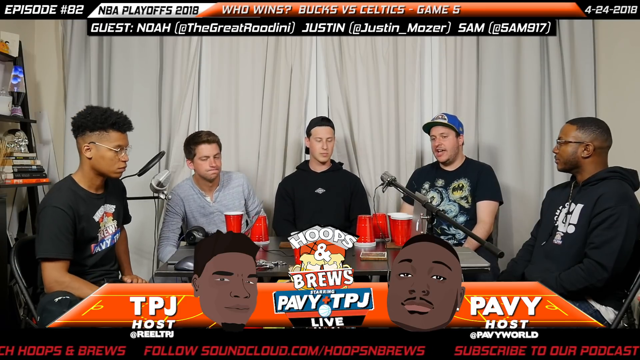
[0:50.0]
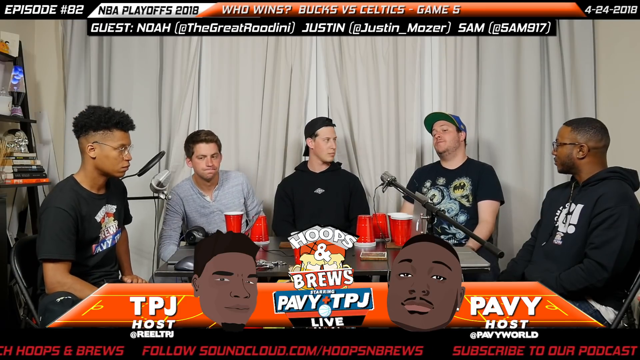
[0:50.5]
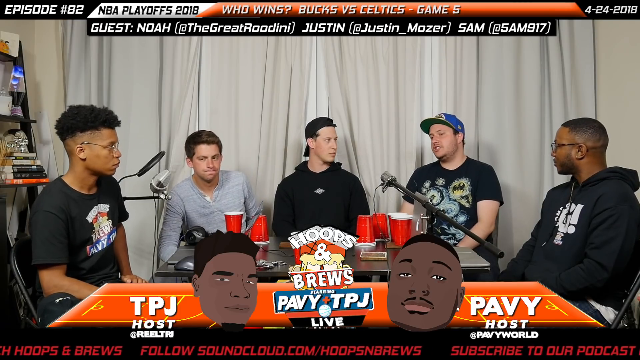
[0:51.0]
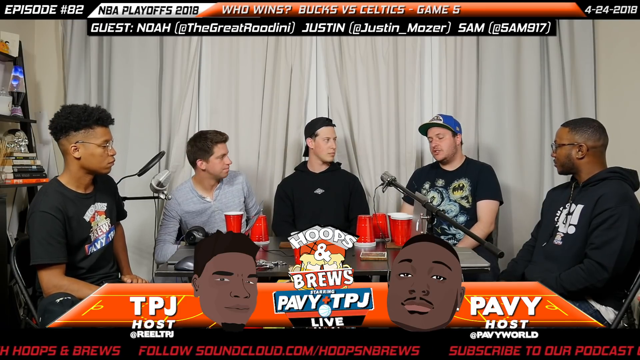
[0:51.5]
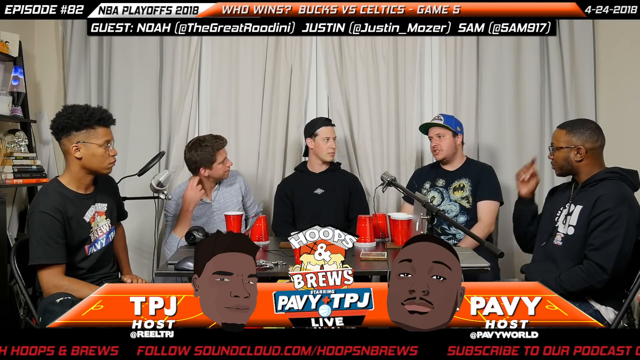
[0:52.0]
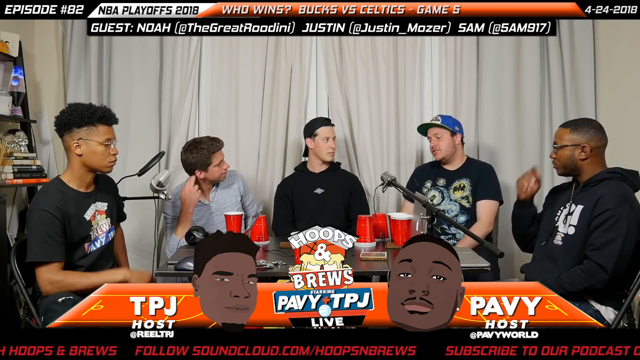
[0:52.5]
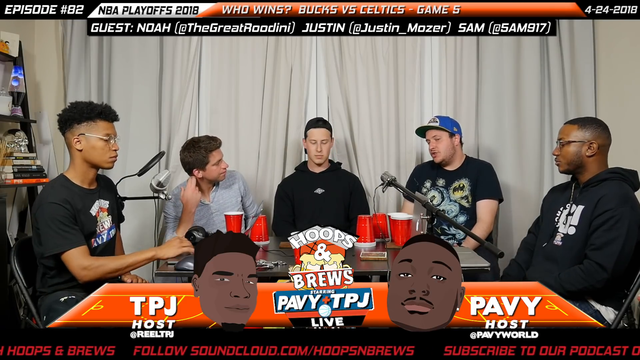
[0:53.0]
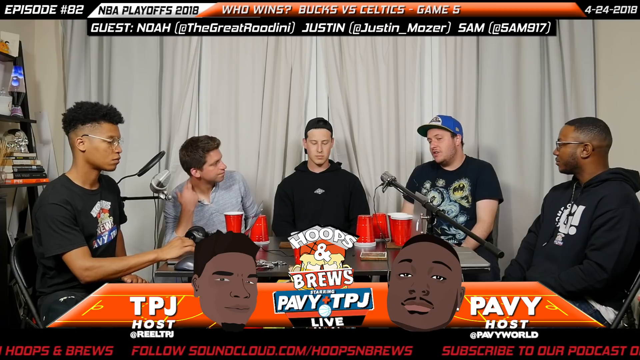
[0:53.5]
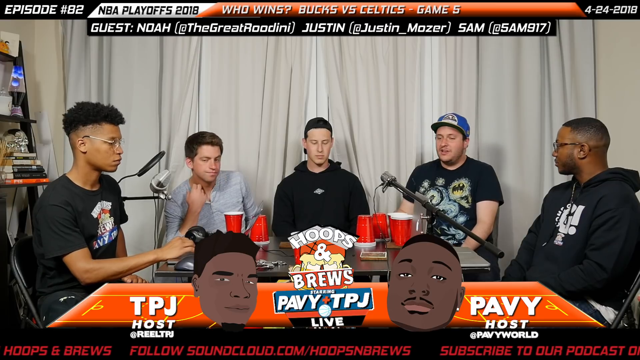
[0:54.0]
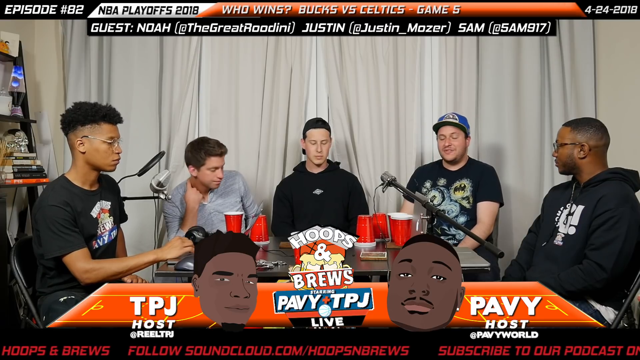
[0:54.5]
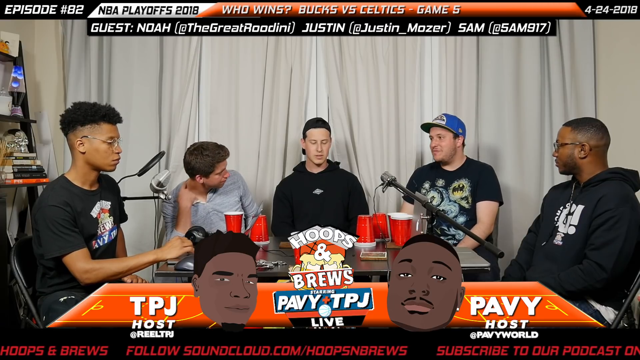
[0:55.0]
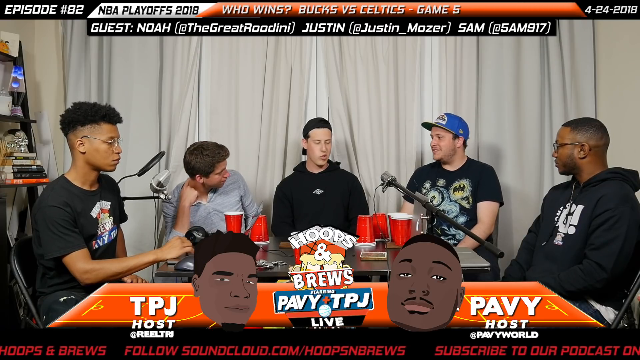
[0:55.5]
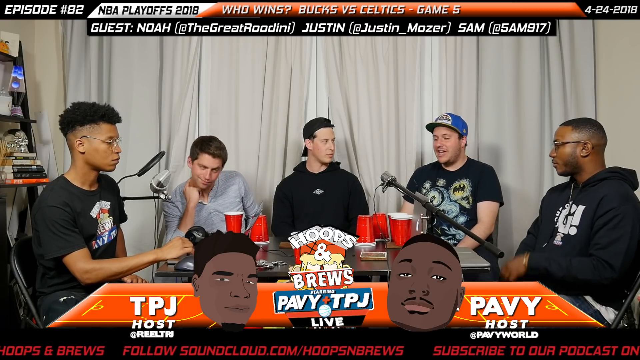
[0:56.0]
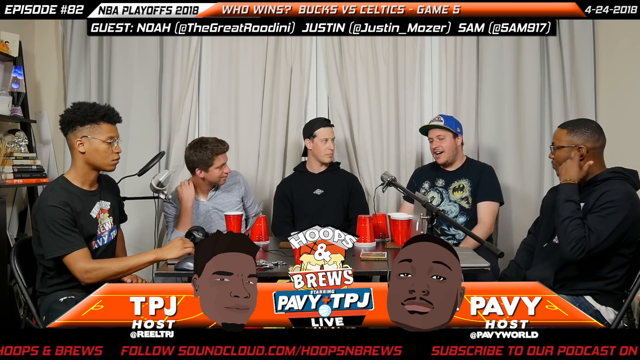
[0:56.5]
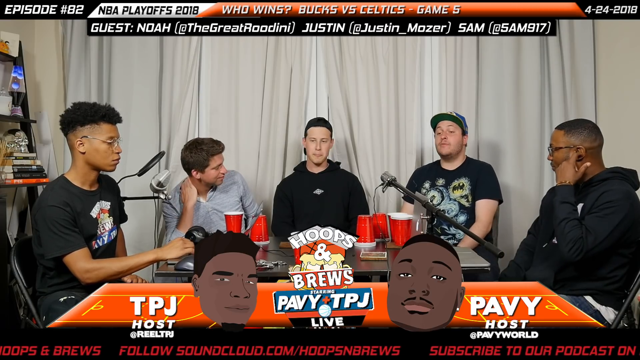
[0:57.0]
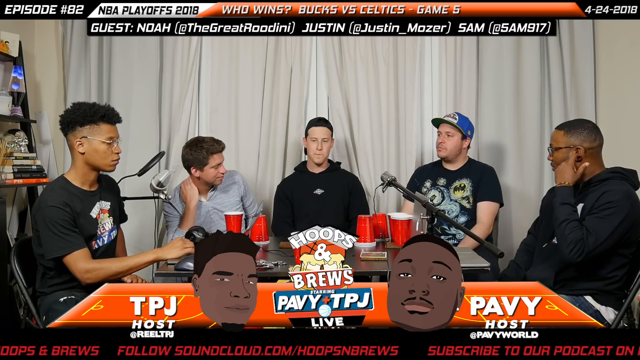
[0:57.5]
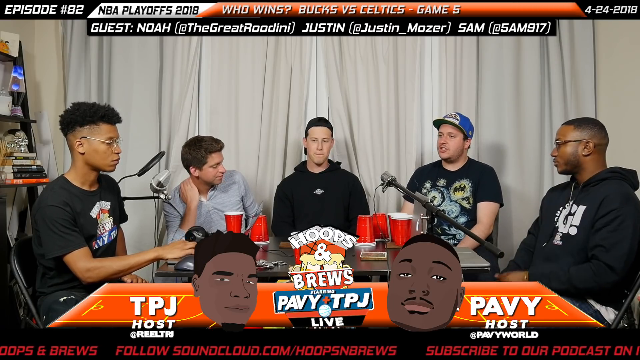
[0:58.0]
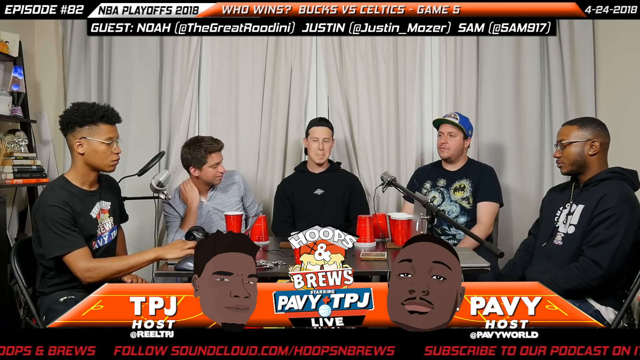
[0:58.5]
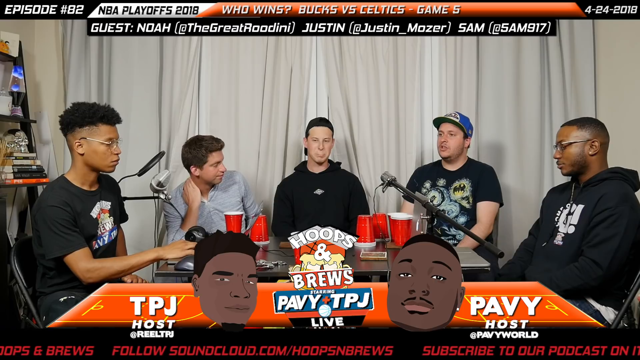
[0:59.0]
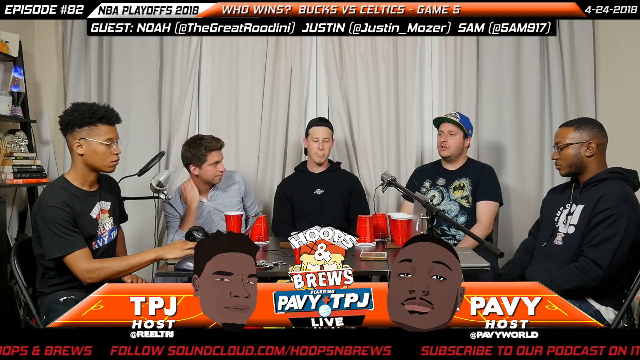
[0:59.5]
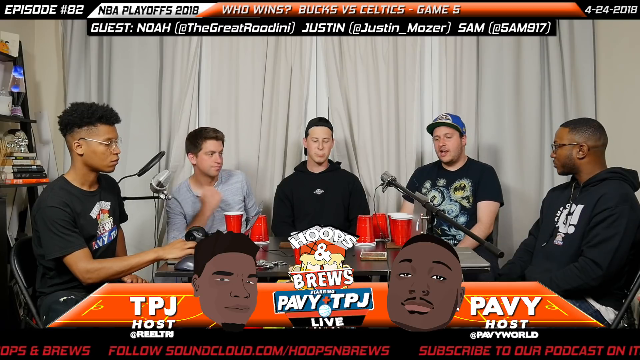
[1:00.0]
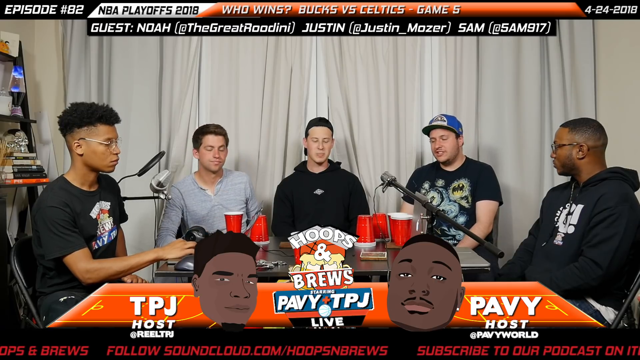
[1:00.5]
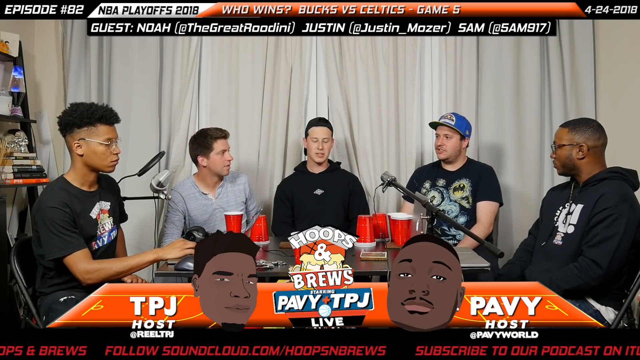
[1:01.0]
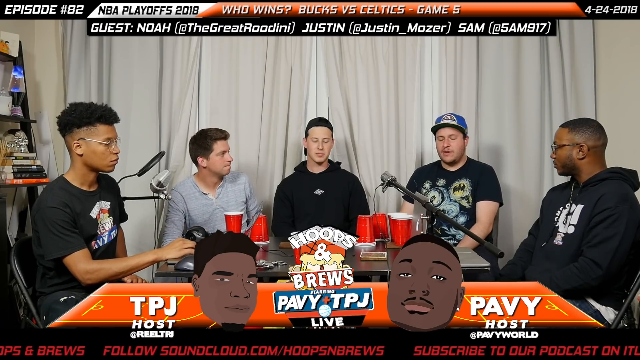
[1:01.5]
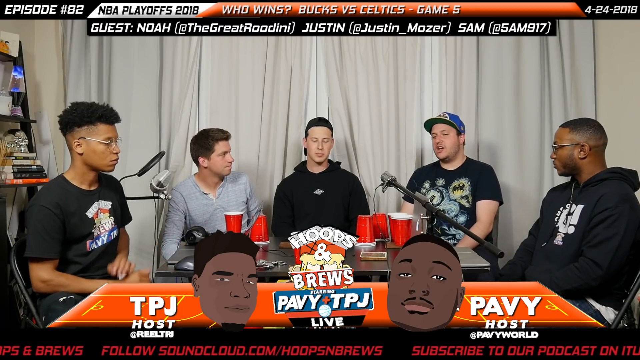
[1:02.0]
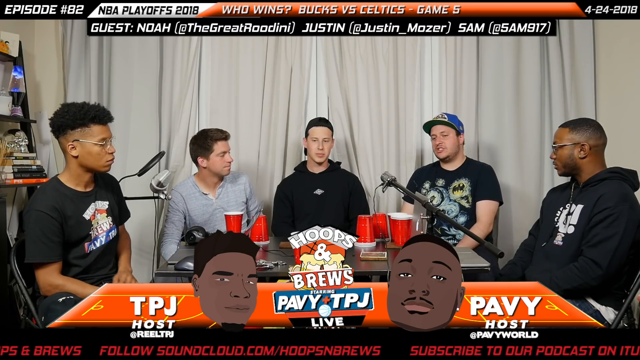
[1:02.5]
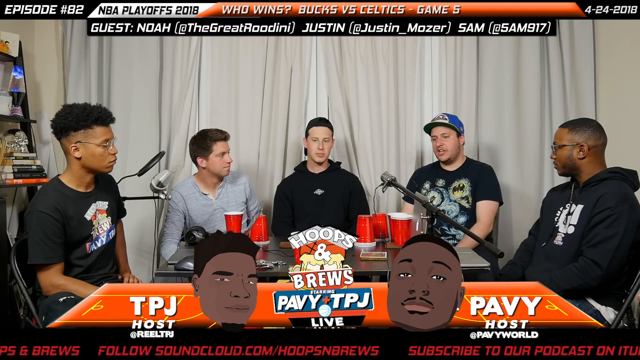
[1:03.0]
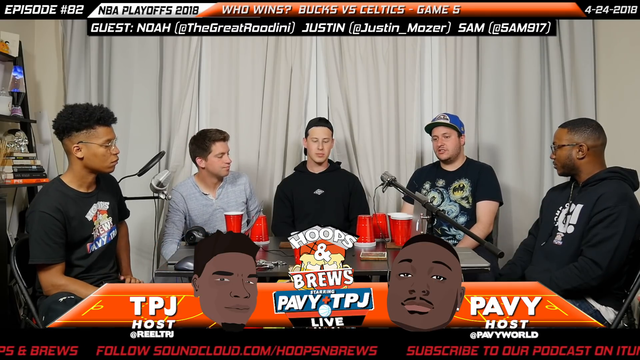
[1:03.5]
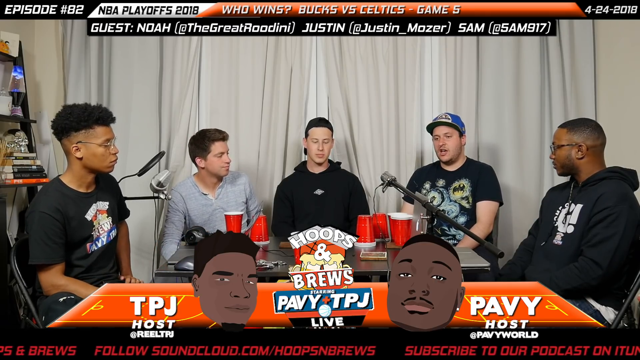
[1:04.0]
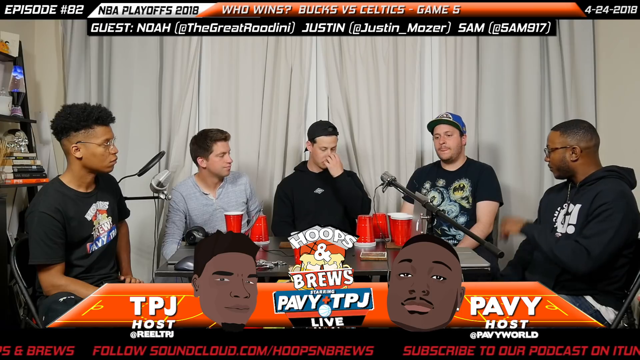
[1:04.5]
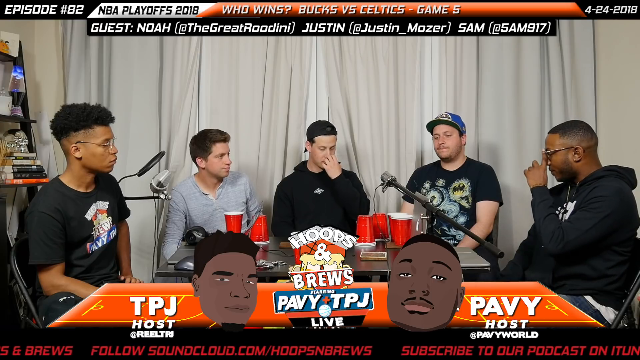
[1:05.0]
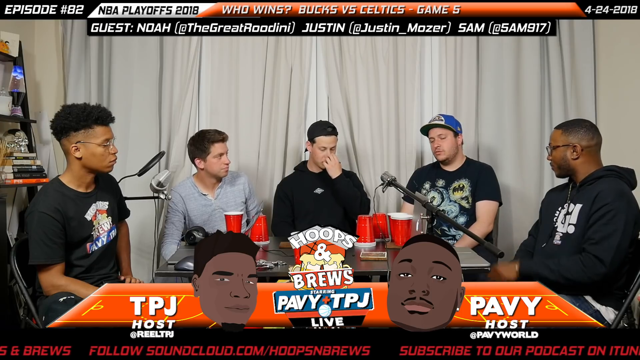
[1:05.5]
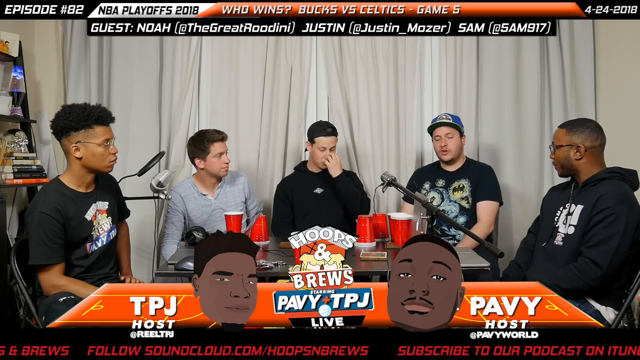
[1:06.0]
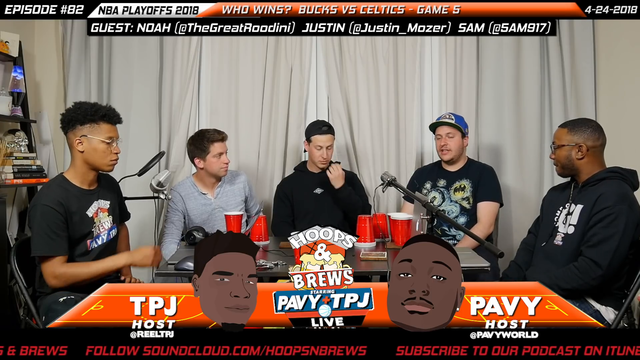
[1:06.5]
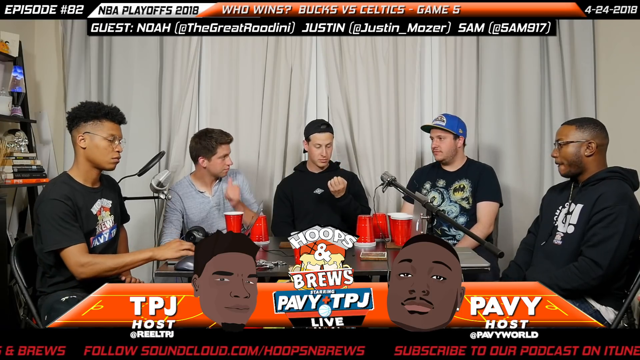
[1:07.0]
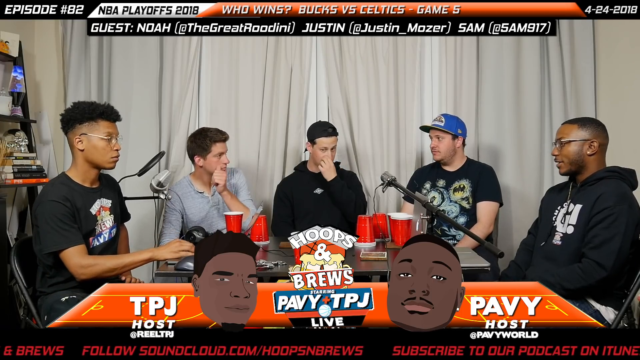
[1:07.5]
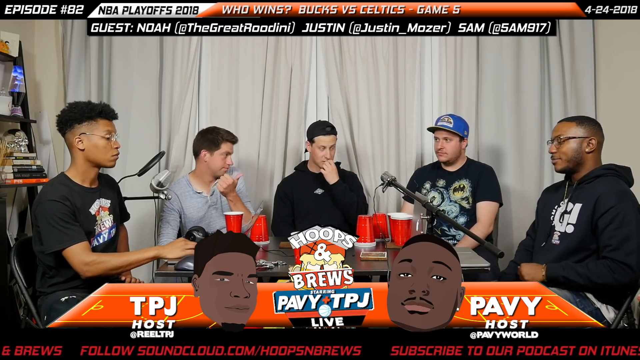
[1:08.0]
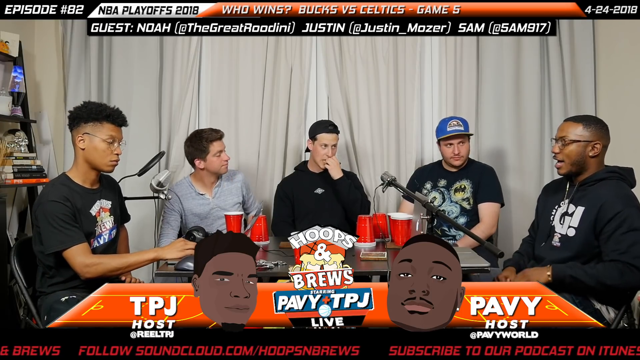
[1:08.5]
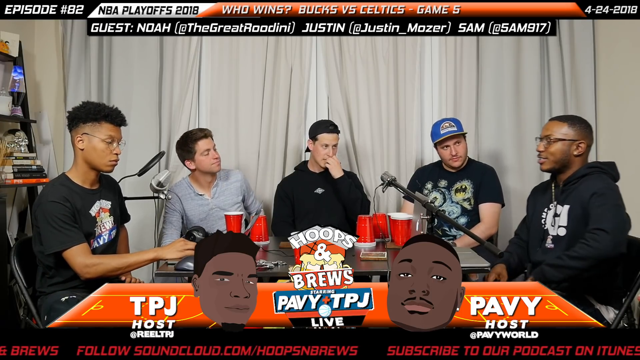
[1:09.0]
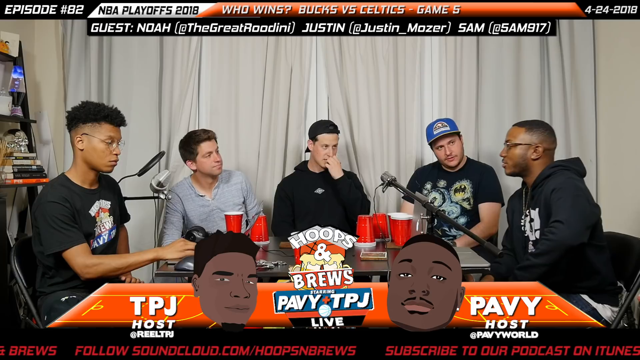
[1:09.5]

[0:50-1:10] Five commentators from the podcast Hoops and Brews are seated around a table, with a number of red cups in the middle of it. On-screen text names the hosts and ends with "Live." In the top left corner, episode number 82 is shown with text asking who wins Bucks versus Celtics Game 5. Guests Rudy, Justin and Moser are listed. Everyone is talking.